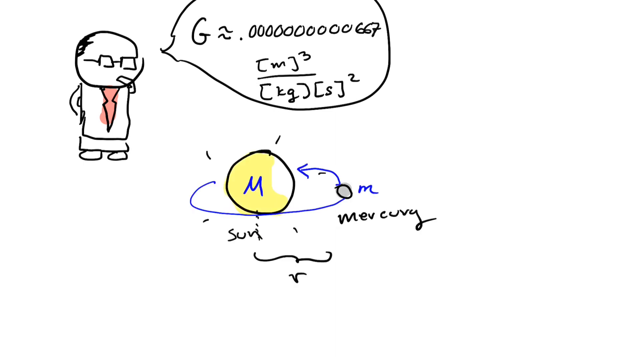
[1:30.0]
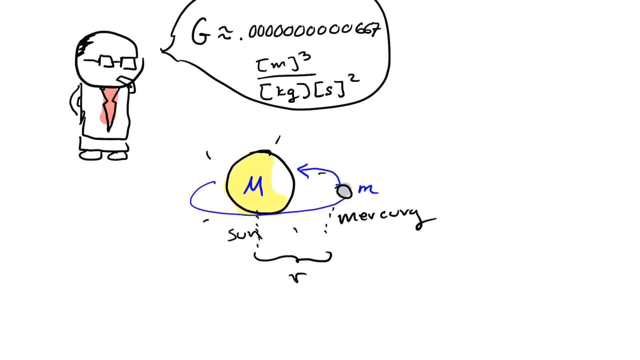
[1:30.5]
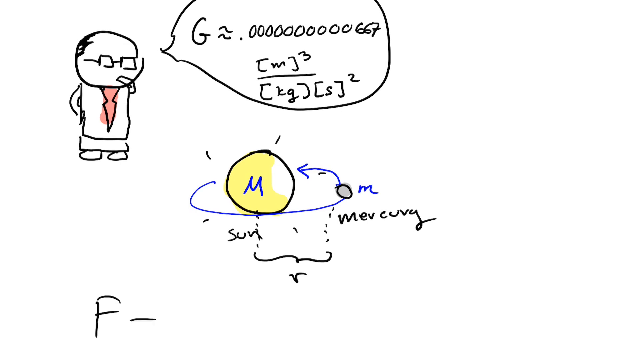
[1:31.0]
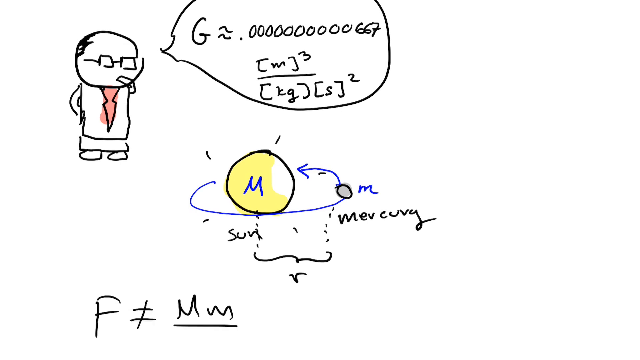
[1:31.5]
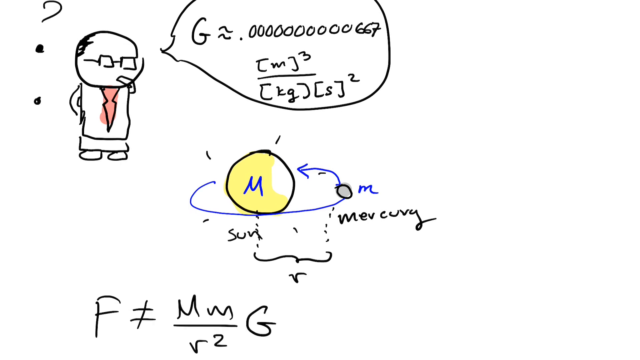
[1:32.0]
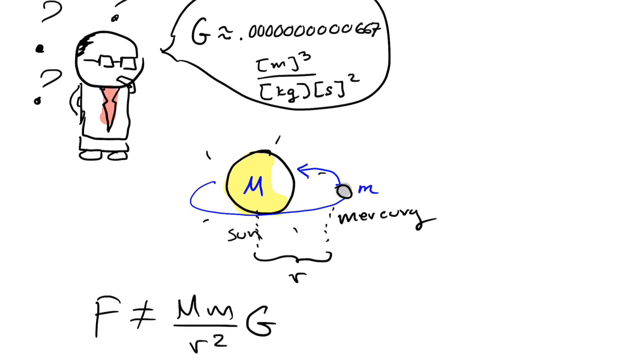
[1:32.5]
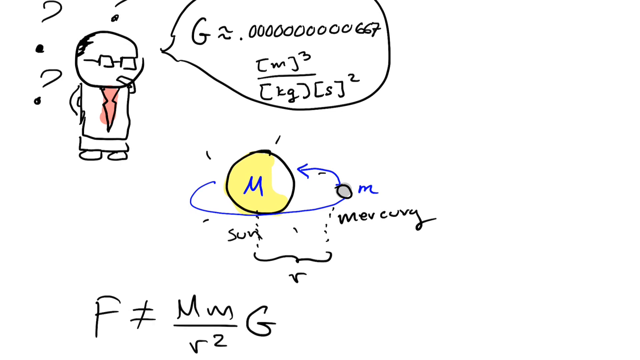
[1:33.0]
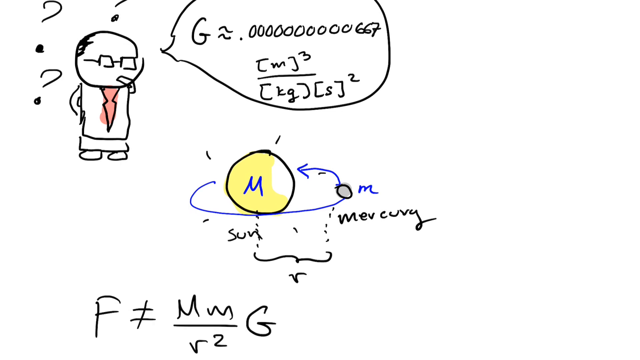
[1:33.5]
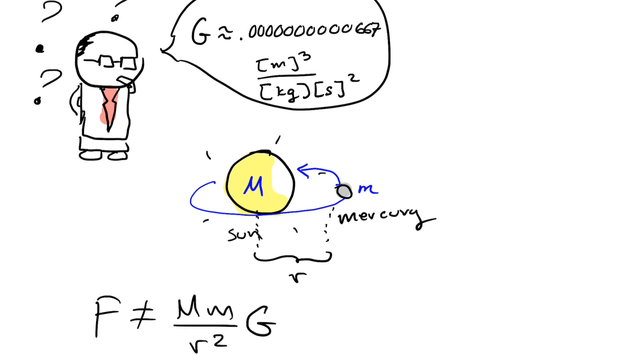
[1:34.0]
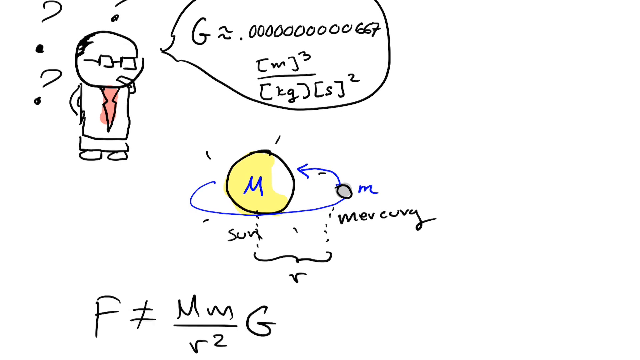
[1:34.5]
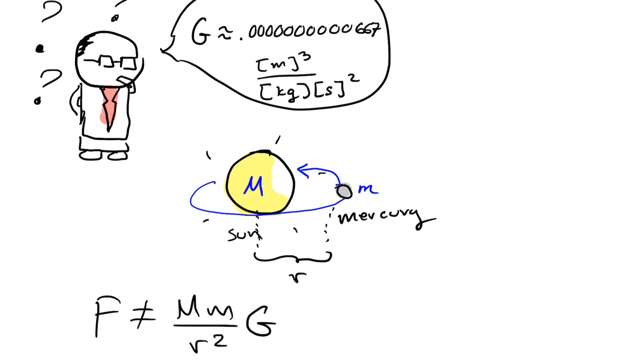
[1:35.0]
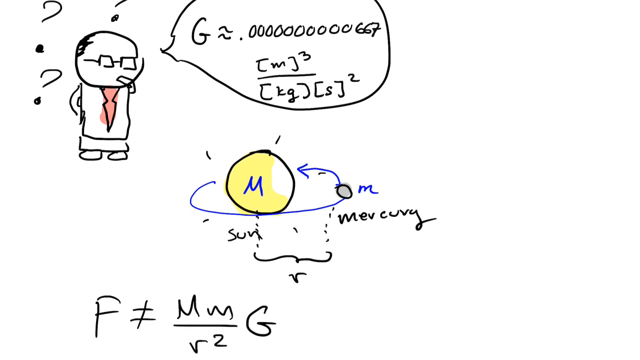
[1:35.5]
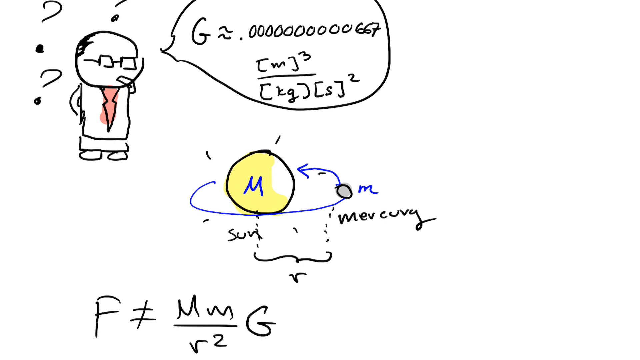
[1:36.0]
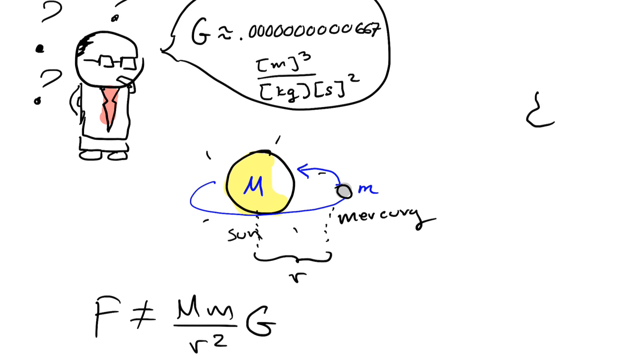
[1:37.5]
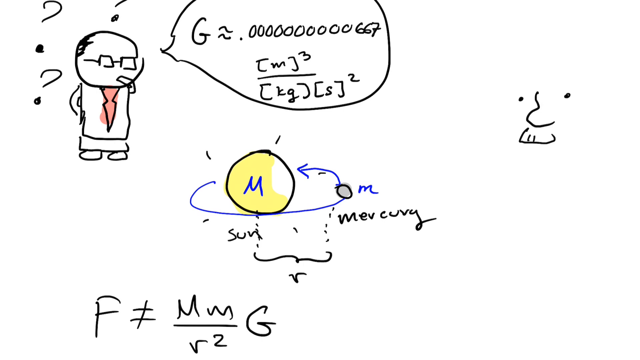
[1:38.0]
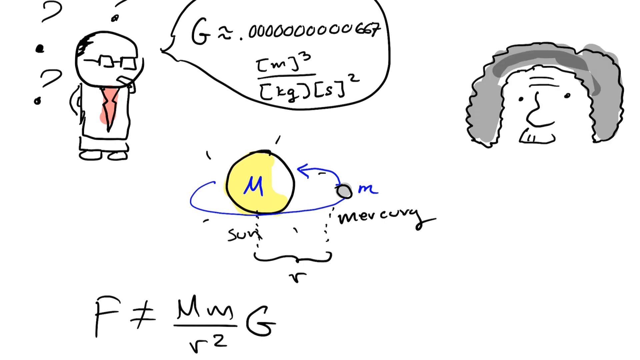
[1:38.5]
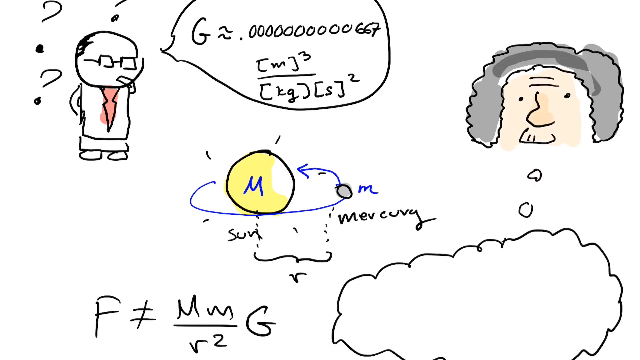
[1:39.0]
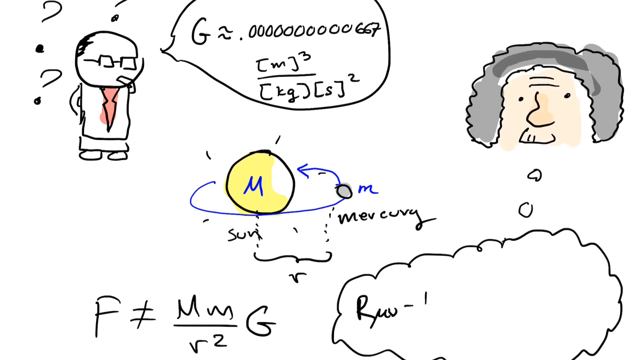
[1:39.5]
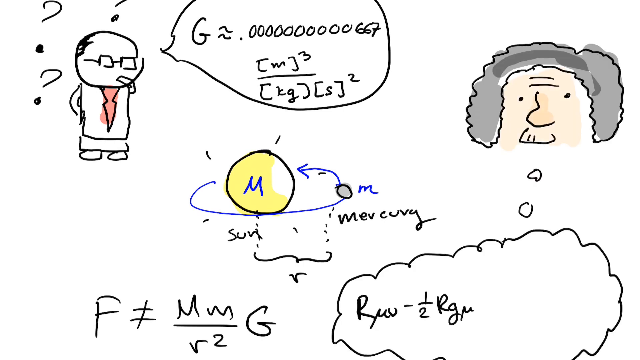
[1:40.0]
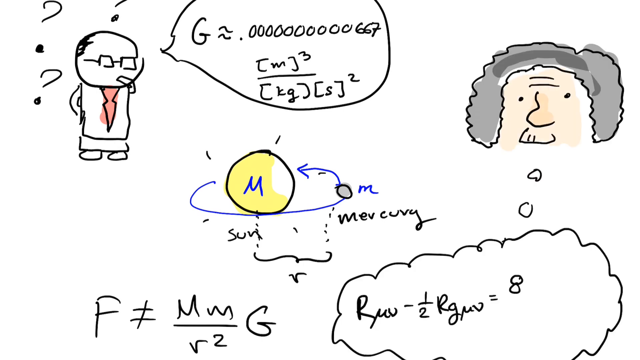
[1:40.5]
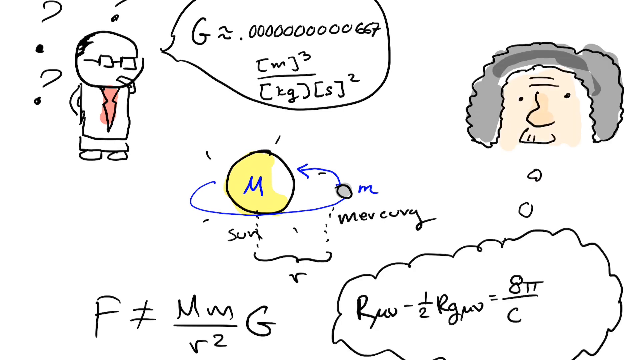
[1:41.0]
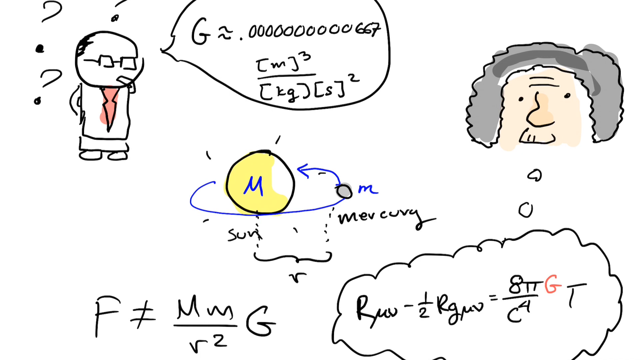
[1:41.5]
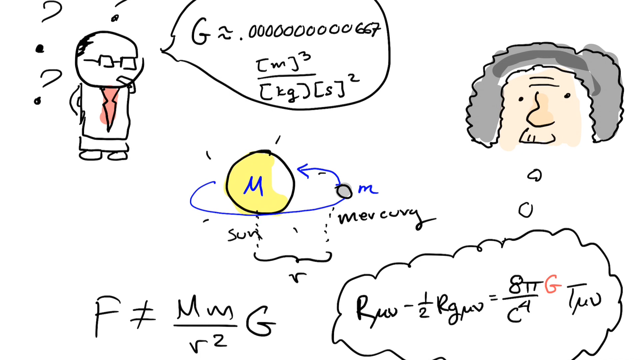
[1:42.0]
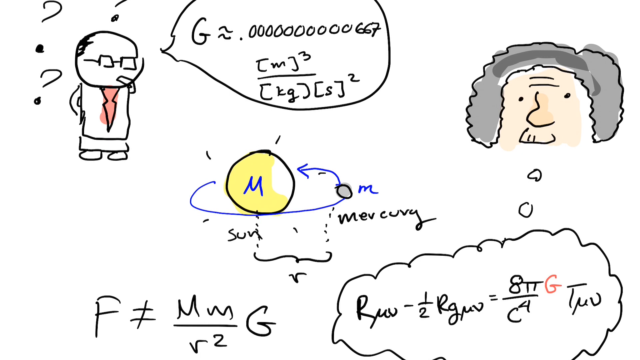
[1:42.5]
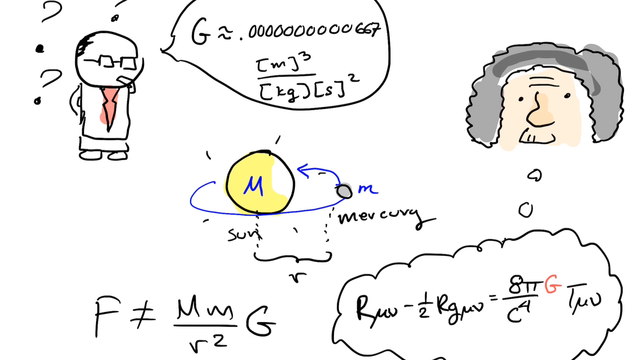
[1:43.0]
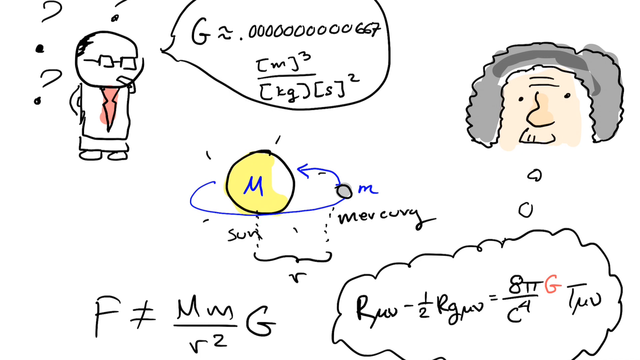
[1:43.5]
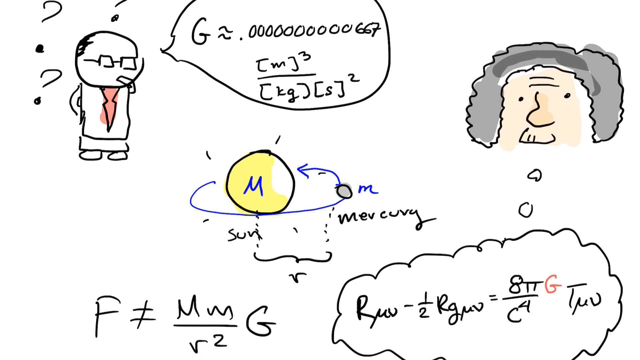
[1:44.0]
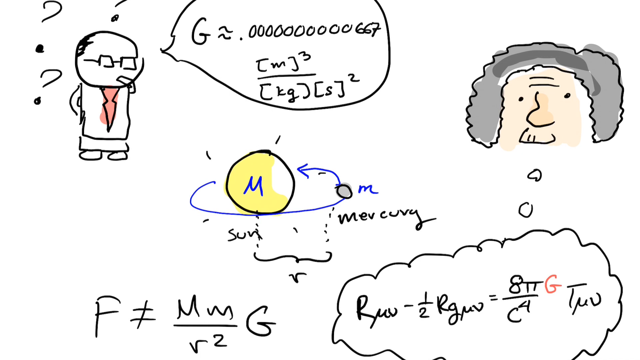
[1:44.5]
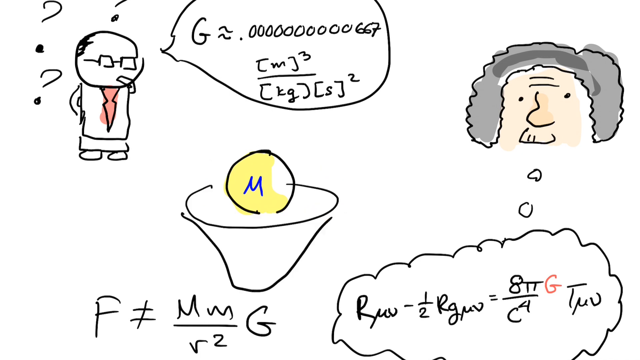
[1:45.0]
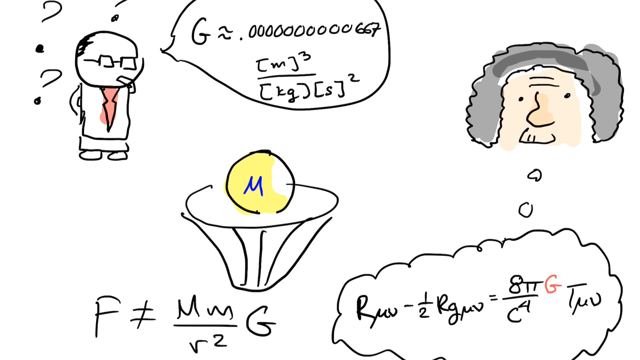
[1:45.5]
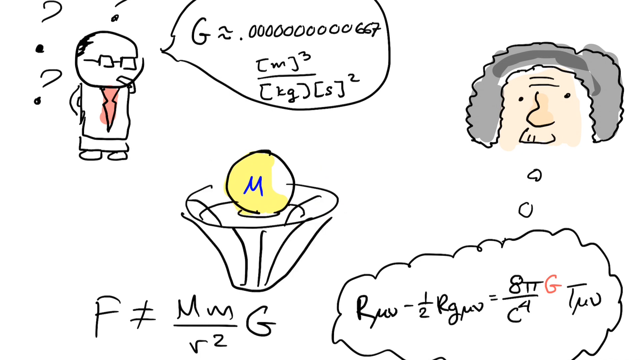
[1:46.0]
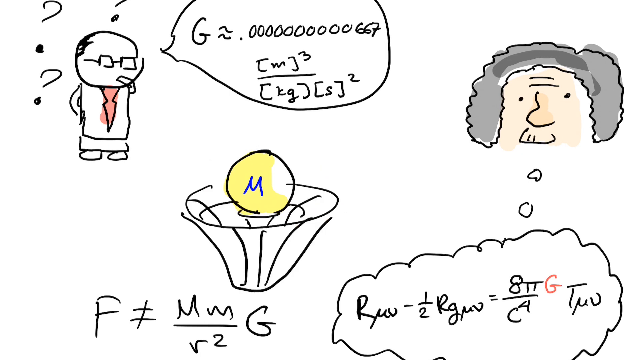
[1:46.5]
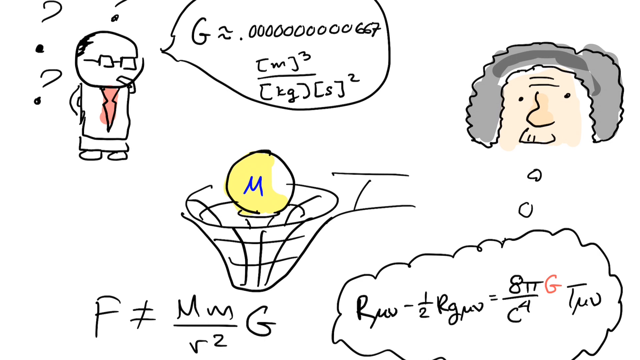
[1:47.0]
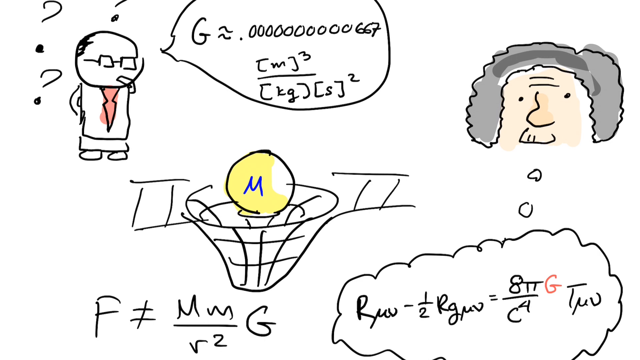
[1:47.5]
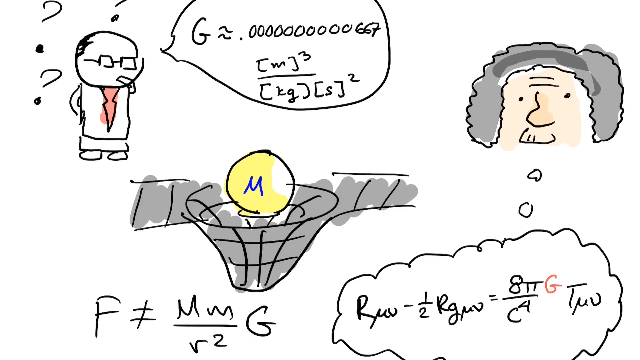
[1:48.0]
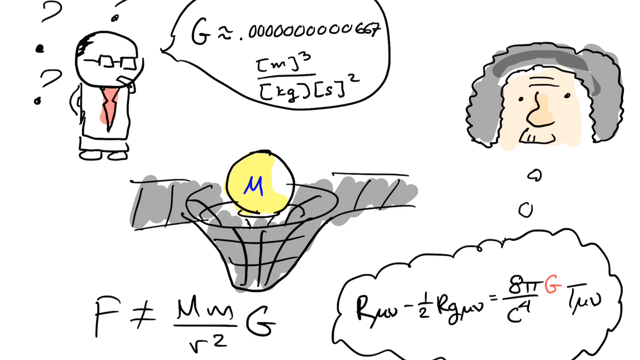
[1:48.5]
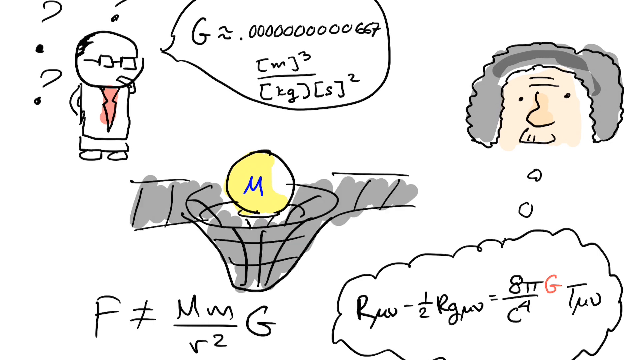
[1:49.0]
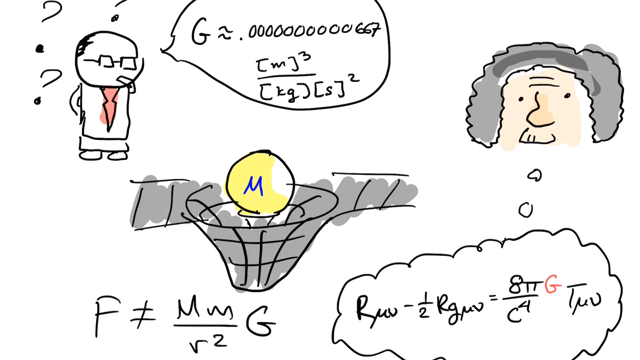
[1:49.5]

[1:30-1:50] The same scientist appears, now with a lot of question marks around him. His math equations are at the top, including one beginning "T =" followed by numbers, with another equation underneath. Below that is a circle drawn in what looks like black ink, colored in yellow, with a blue M in it and a rotational arrow going around it, labelled "the sun." There is also a "mercury" label next to what looks like it is supposed to be a planet, kind of oval in shape, with an M around it. At the bottom is "F =" with something crossed out, a capital M and a lowercase m over R2, and then a big B. Then an old man is sketched out, with gray frizzy hair and a mustache, and he also has a thought bubble with math equations.